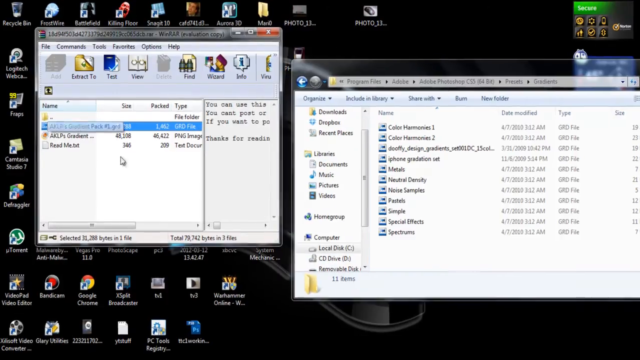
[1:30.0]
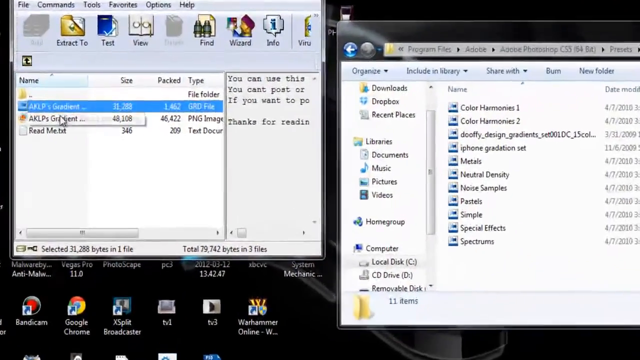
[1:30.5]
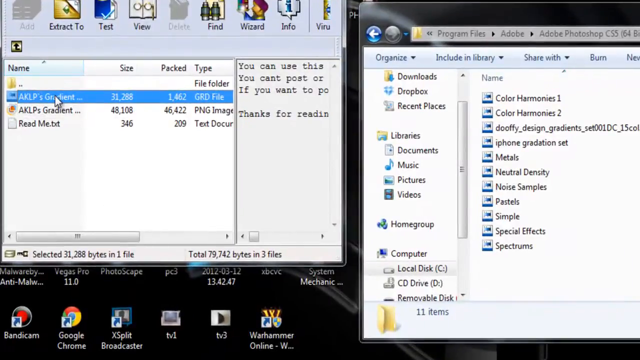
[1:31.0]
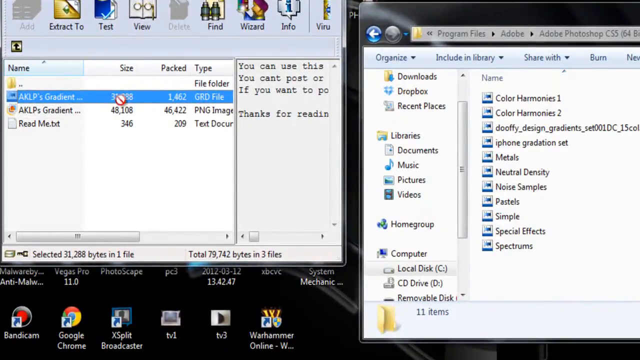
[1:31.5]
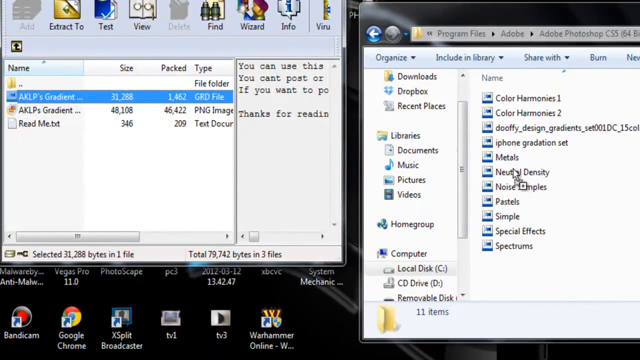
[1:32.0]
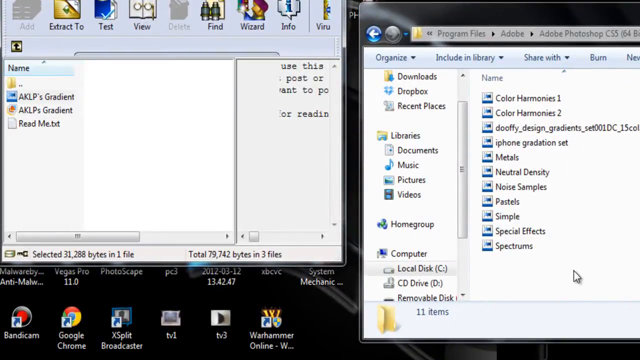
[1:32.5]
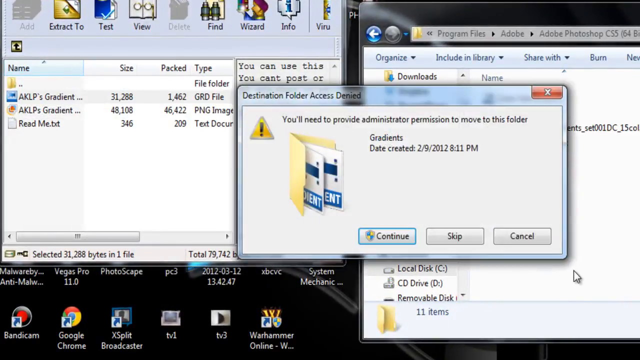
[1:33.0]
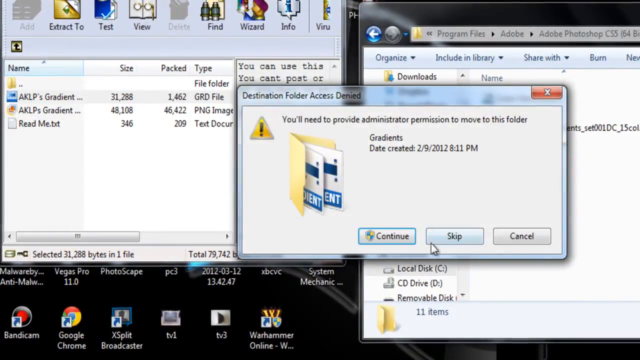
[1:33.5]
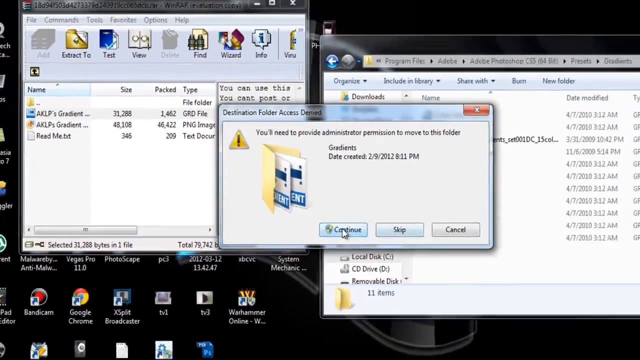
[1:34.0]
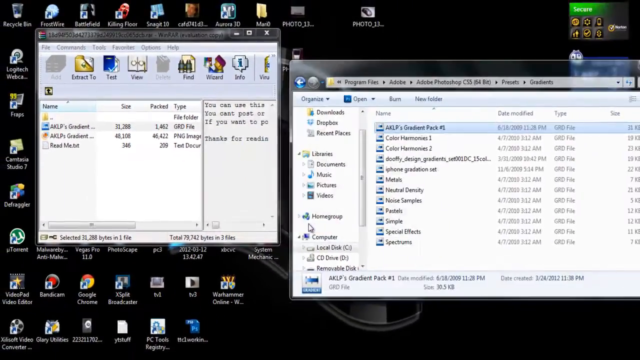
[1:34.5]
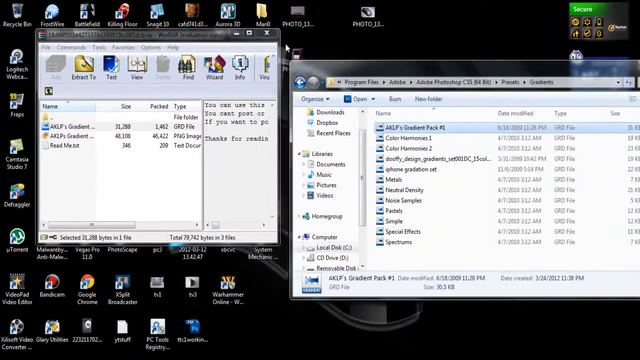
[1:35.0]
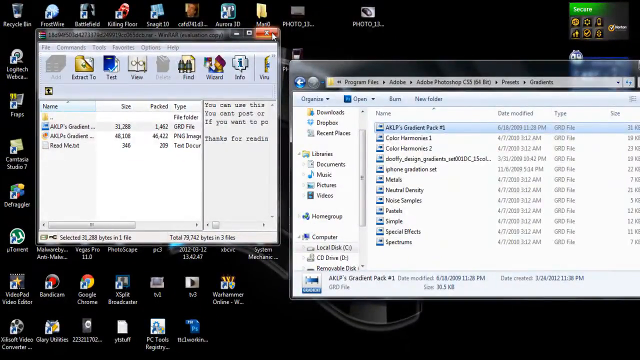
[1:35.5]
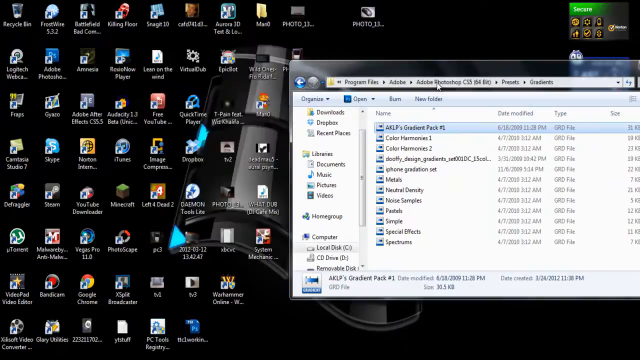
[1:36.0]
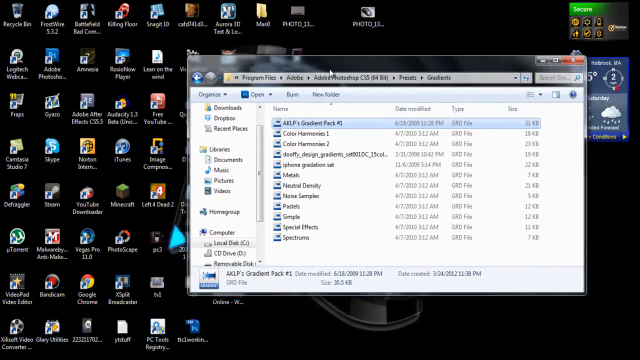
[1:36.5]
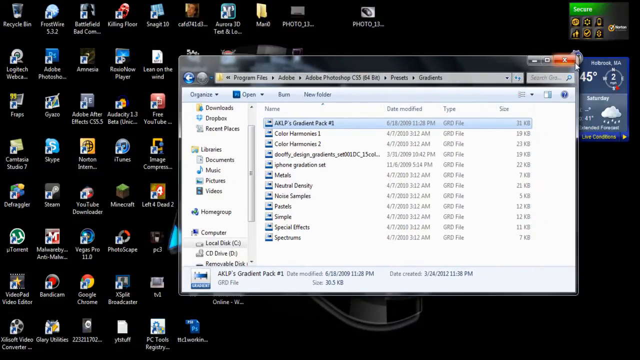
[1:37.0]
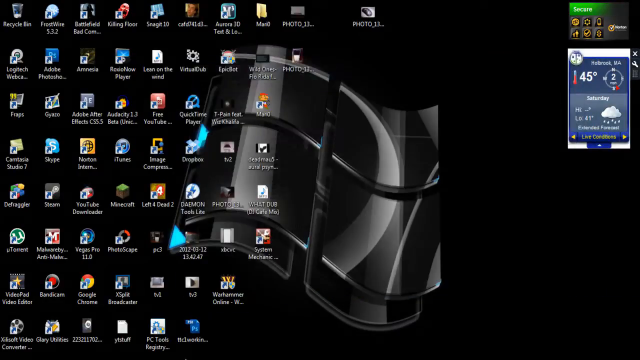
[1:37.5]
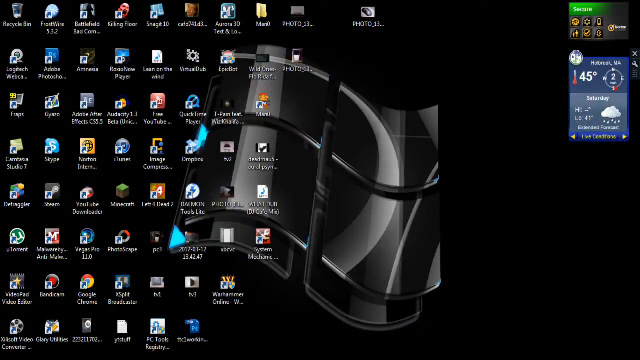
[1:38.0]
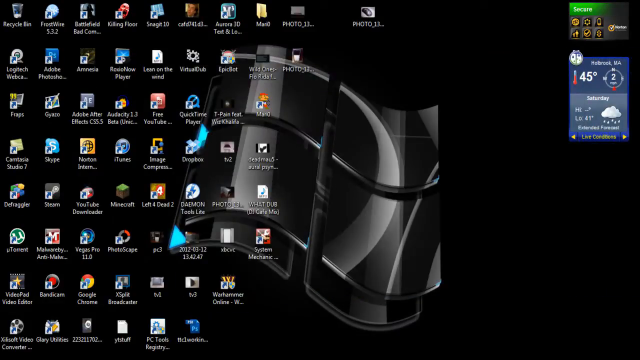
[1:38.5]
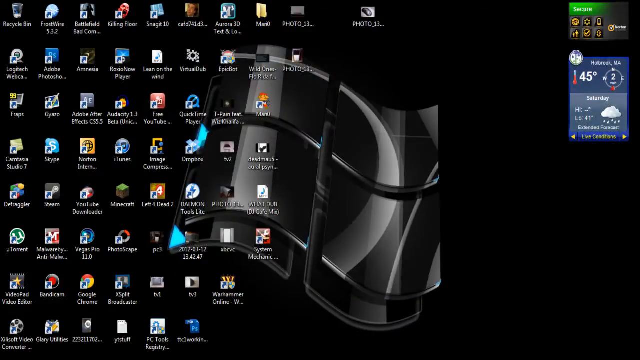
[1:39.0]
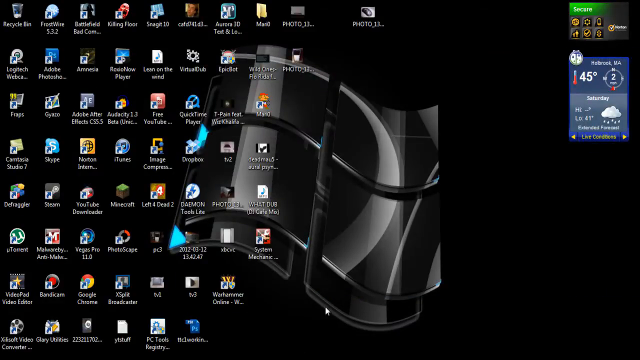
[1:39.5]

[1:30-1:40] Two windows are open on a Windows computer: one is File Explorer, and the other is like a special app dedicated to Adobe Photoshop gradients. A file of 1288 bytes, a GRD file, is accessed. As it is accessed, a pop-up message asks for administrator permission to move the AKLP S-Gradients file to the File Explorer location where the different gradients are kept. The mouse clicks to confirm the administrator permission, the file is added, and the tabs are closed.